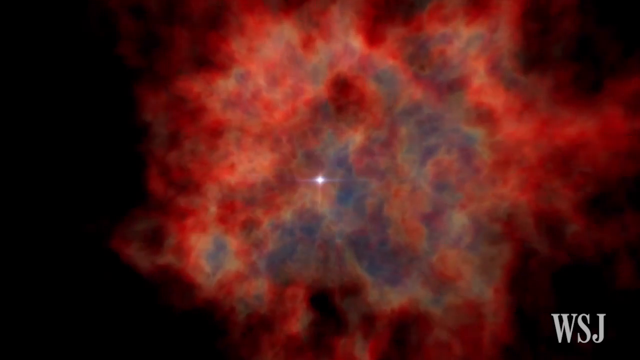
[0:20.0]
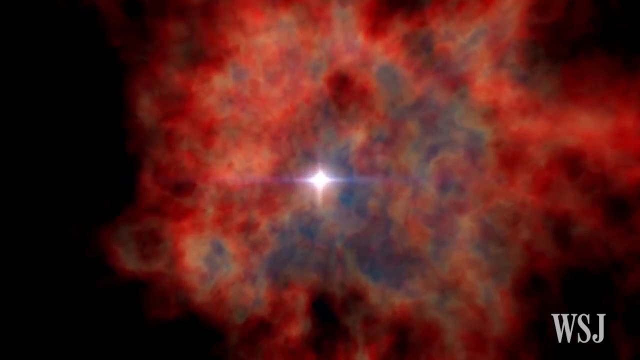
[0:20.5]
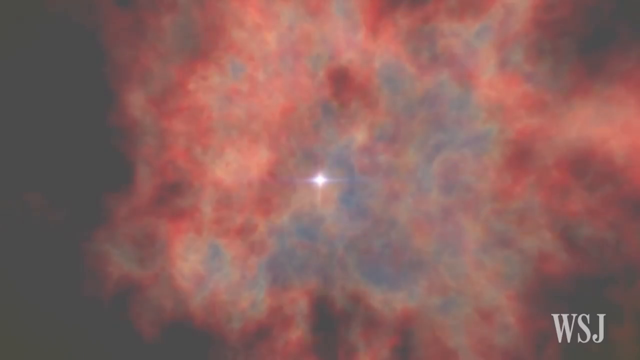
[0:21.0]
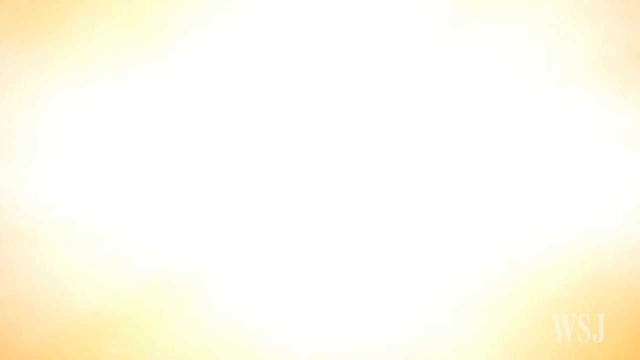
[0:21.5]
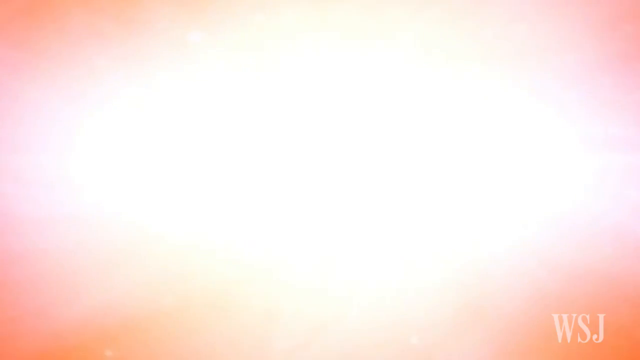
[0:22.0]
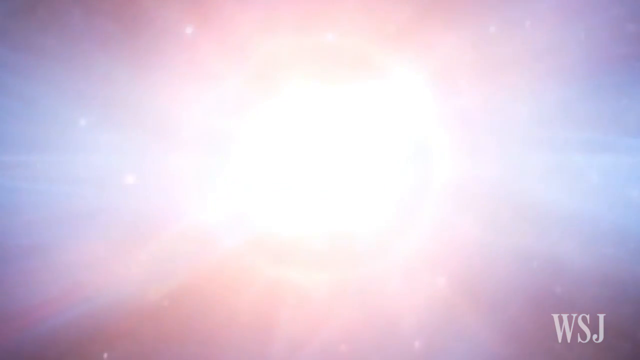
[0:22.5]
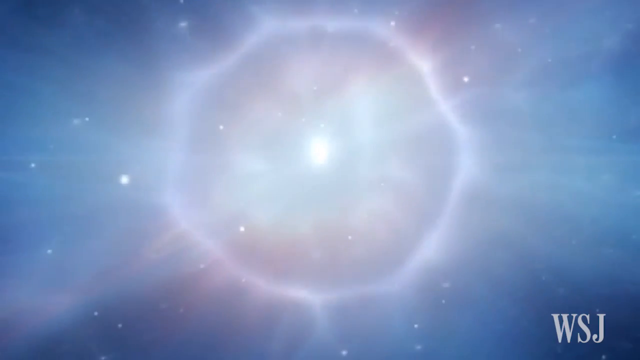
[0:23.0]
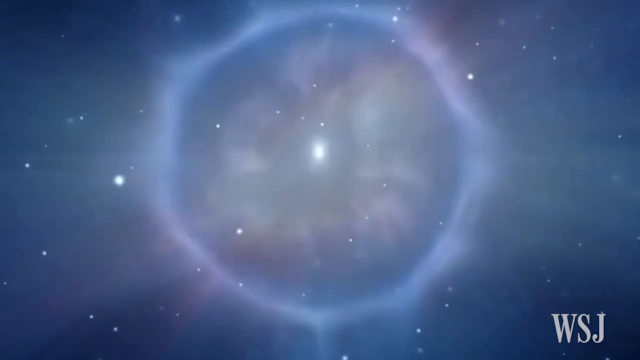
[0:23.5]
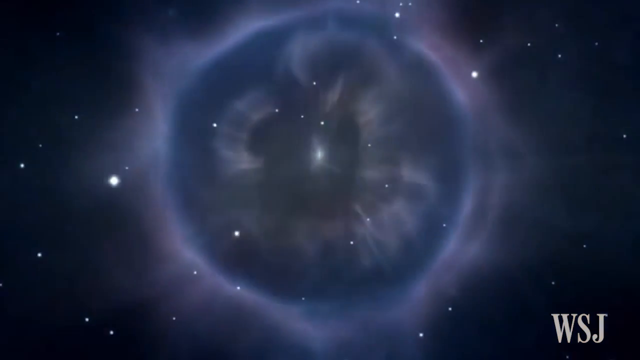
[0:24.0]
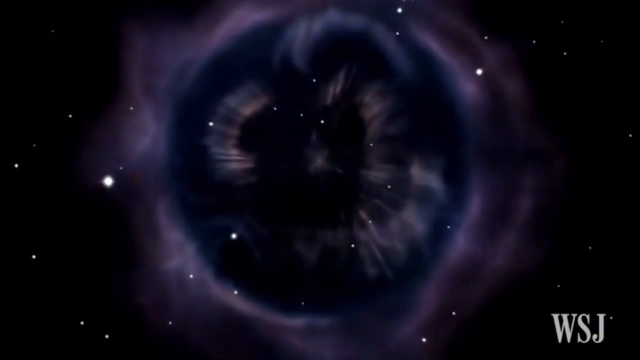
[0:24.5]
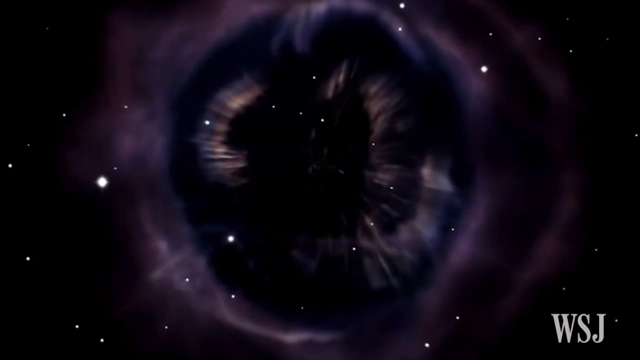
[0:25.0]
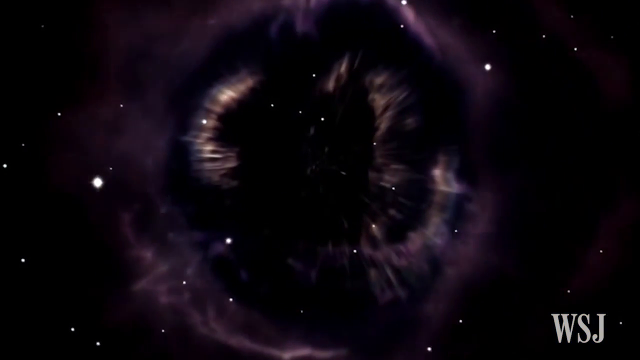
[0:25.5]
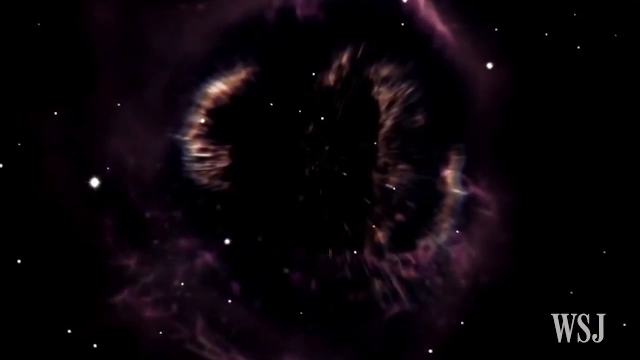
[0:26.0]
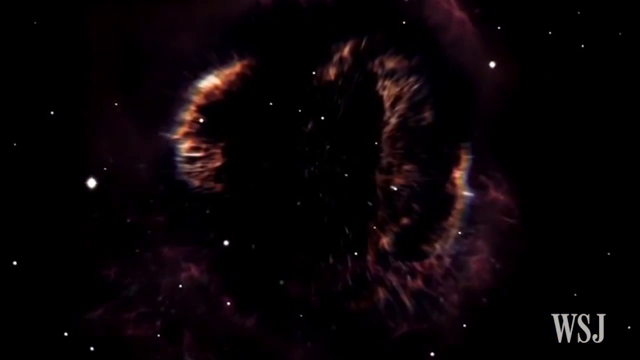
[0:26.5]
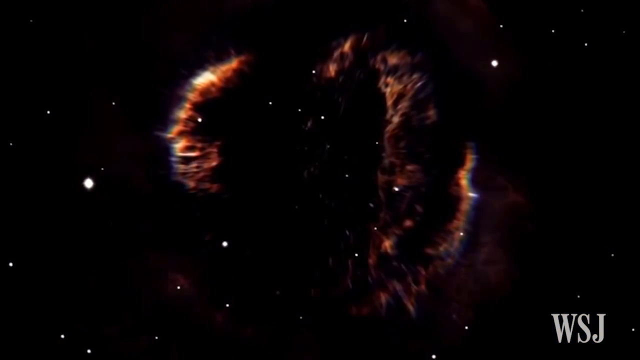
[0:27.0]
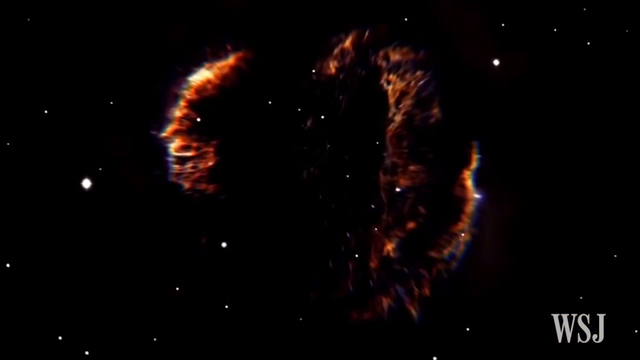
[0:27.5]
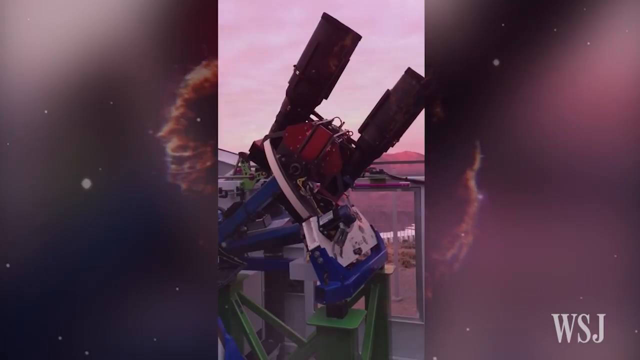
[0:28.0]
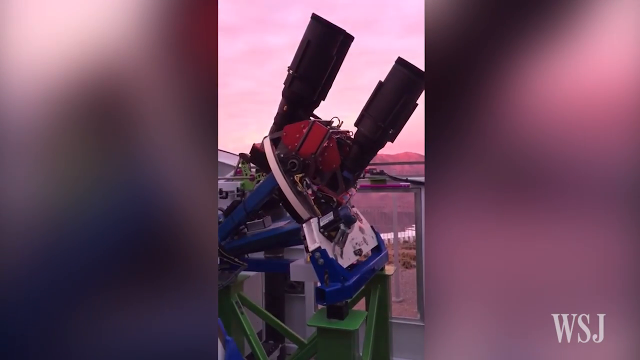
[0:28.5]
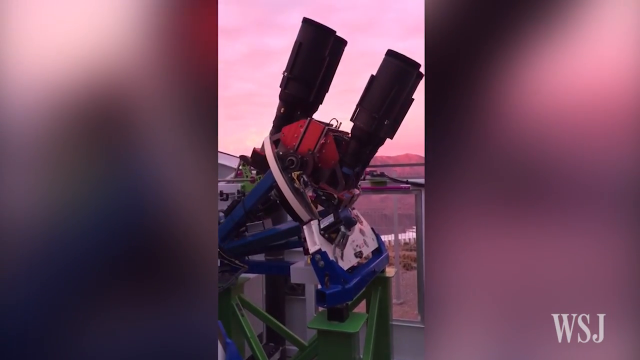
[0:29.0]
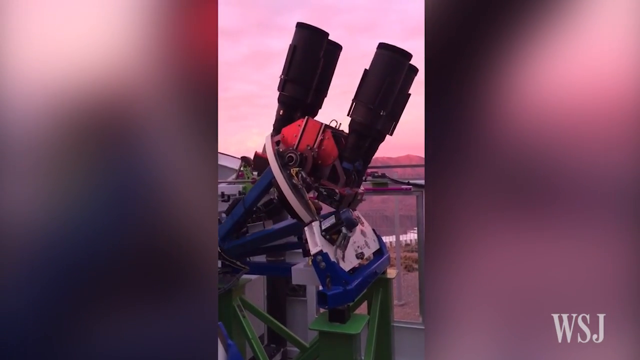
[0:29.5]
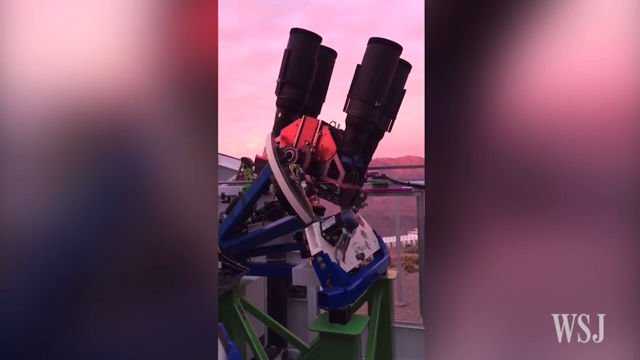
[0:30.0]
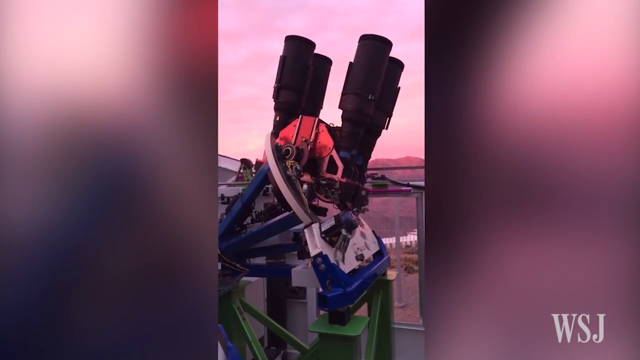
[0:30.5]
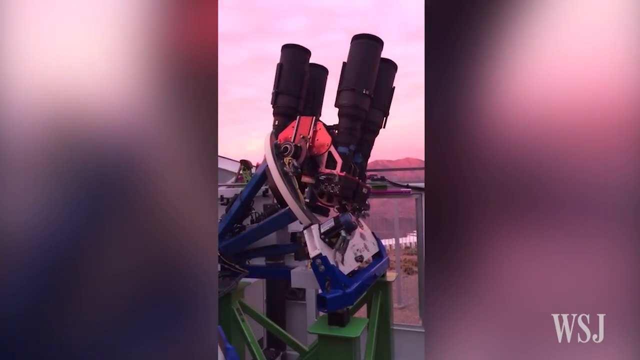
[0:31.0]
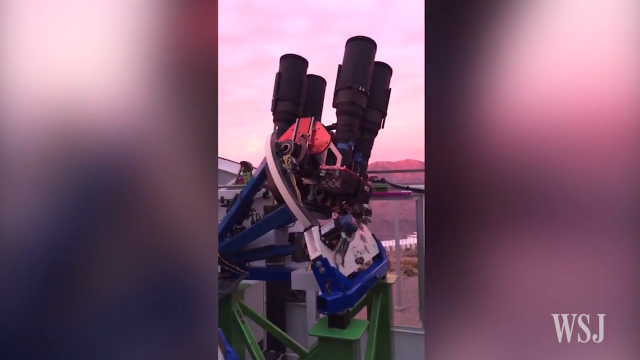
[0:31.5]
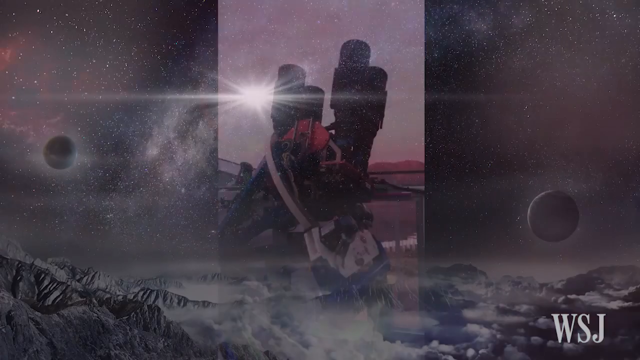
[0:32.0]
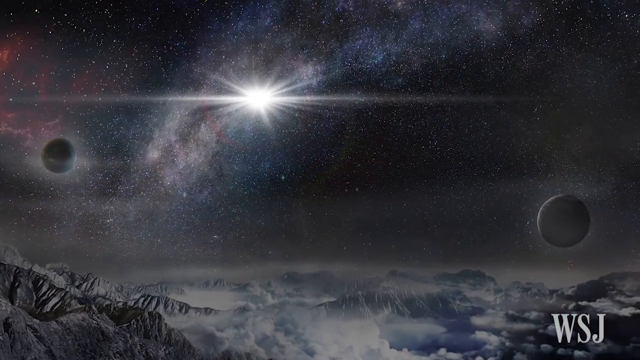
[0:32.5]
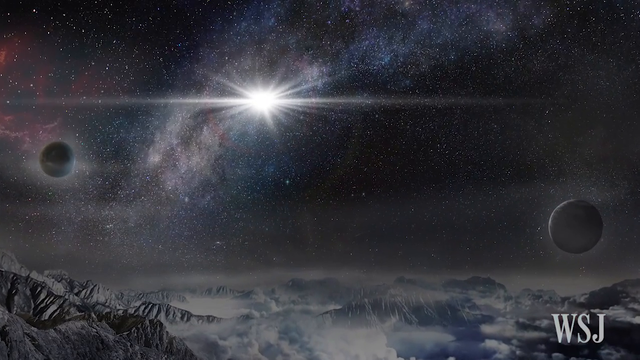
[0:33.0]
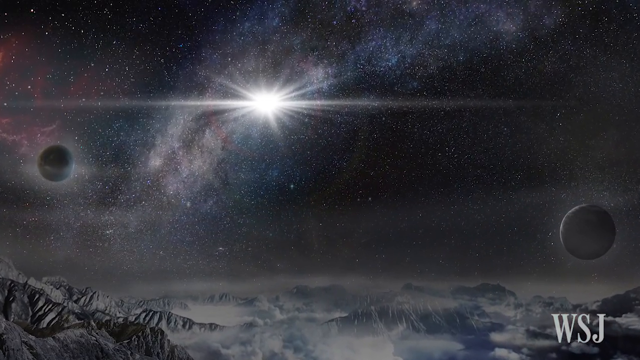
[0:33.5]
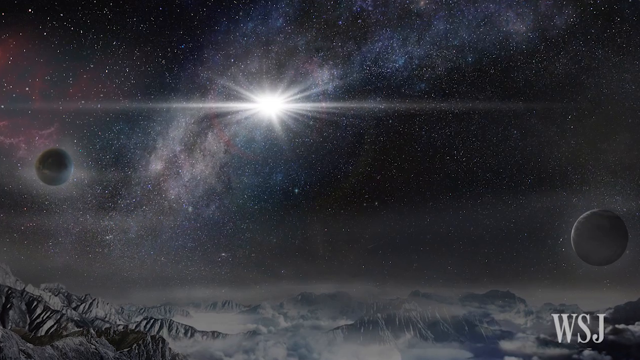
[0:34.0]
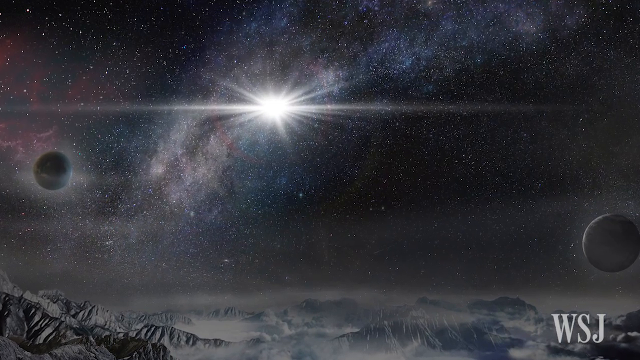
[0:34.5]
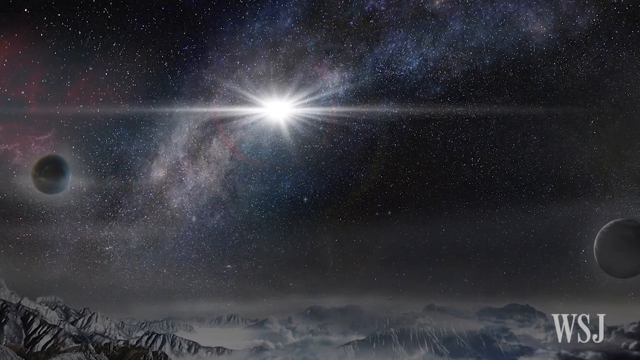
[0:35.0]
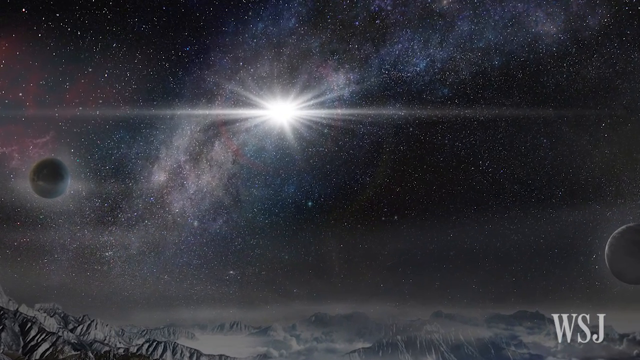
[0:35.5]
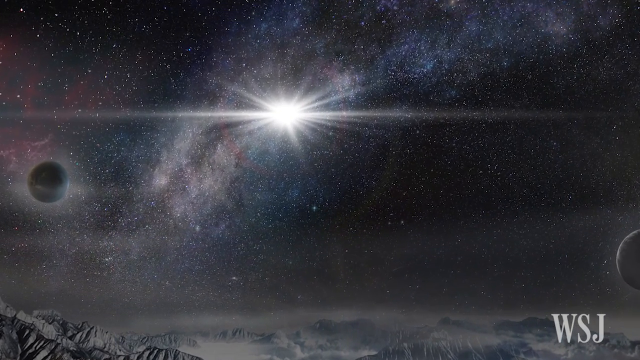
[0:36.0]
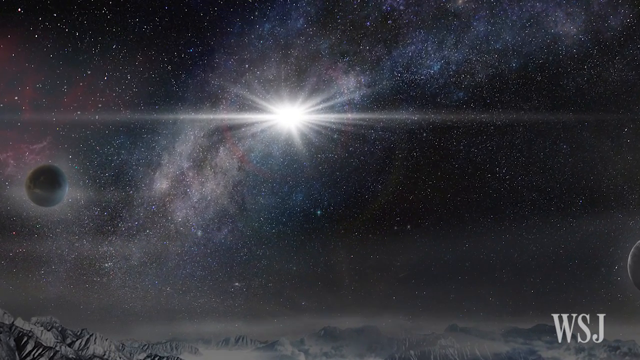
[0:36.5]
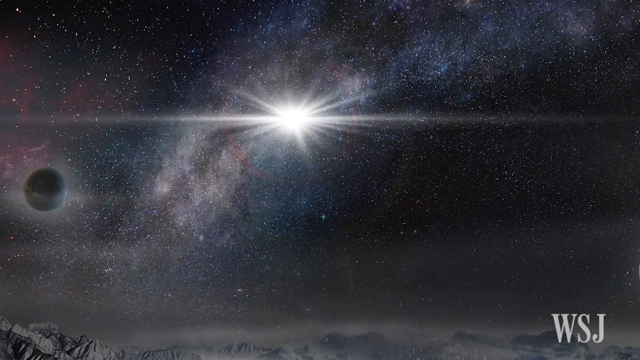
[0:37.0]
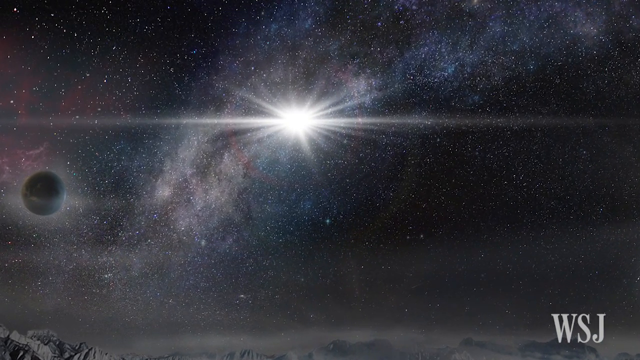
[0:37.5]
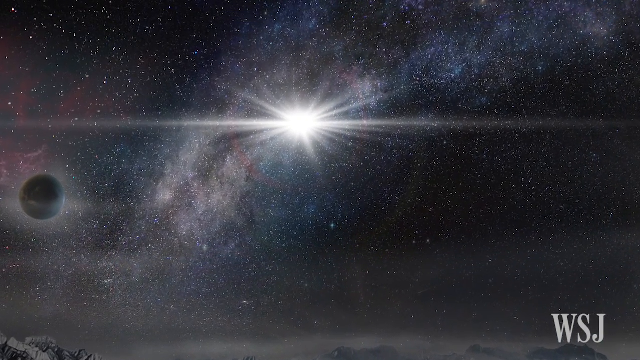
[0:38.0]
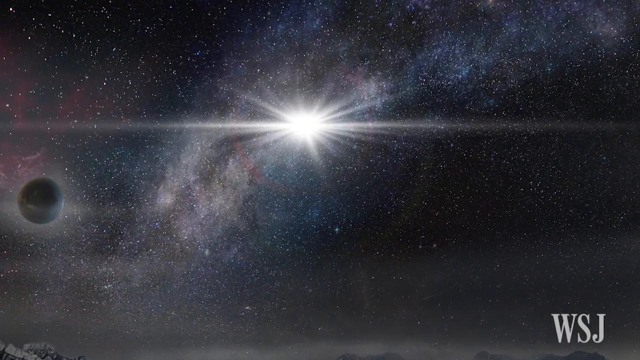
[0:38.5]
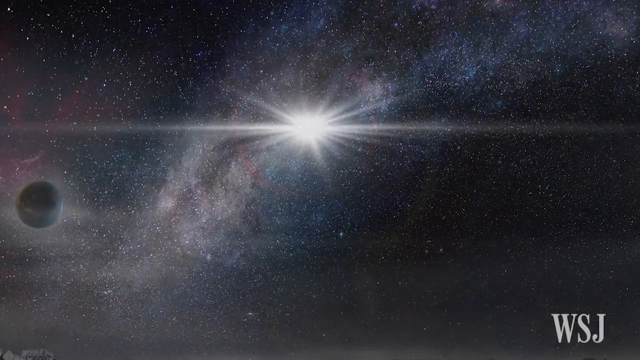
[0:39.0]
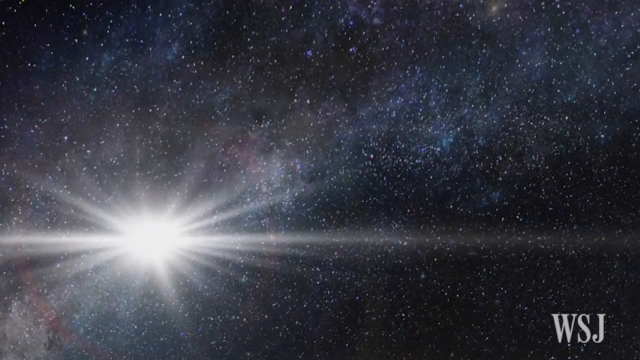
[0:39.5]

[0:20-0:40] The view stays at the centre of the star, which suddenly flashes across the screen, giving way to what appears to be a dying star. It gradually fades, and a mechanised telescope is seen scanning the horizons in what looks like a desert area, pointing out to space. Next comes an image of what appears to be a very distant planet, rocky with a bit of cloud or steam. A satellite, apparently some sort of moon, is very close to the planet, and a second moon is visible in the distance. A close-in sun follows, then thousands of stars, almost as though looking straight at the Milky Way. At the end there is another close-up view of the star above that planet, an imaginative illustration.